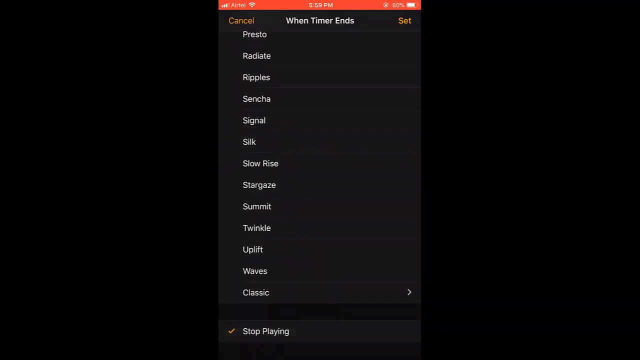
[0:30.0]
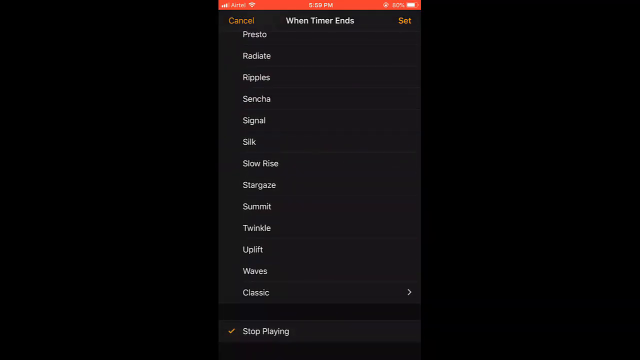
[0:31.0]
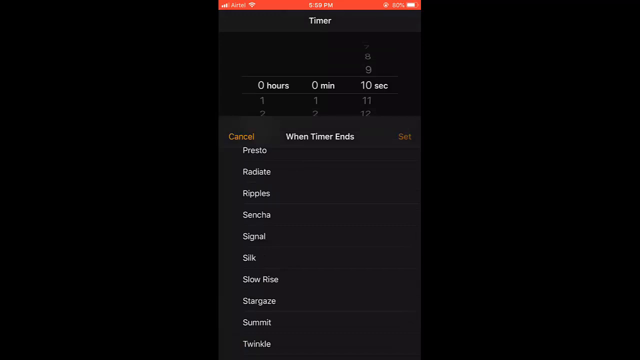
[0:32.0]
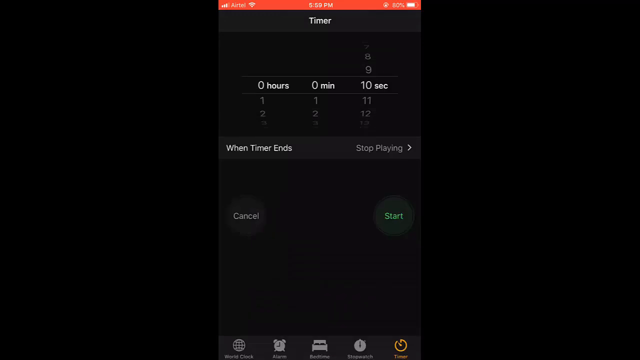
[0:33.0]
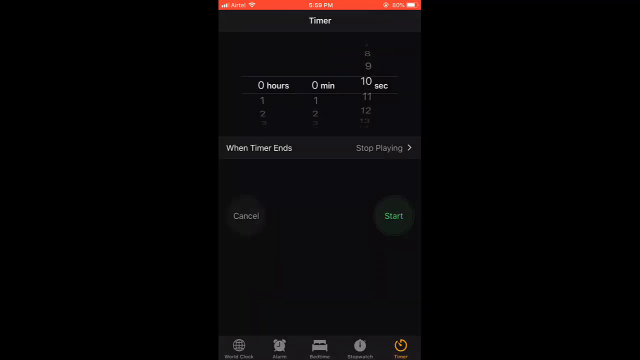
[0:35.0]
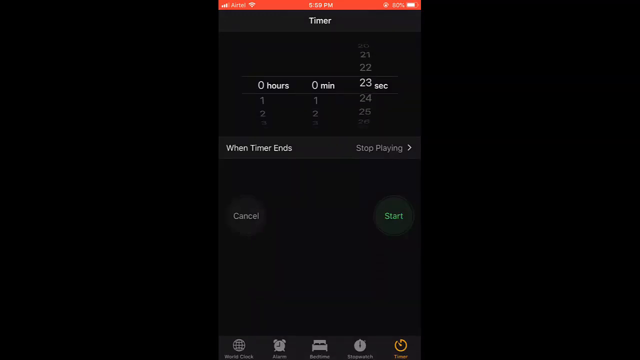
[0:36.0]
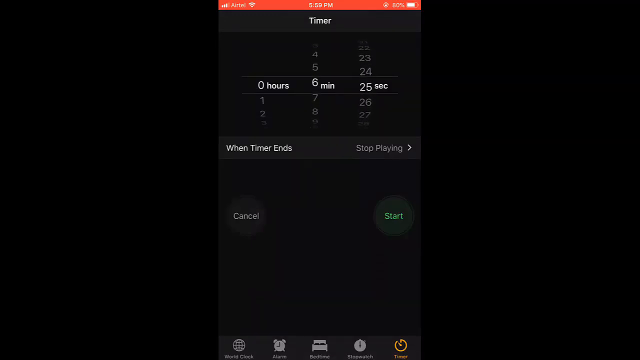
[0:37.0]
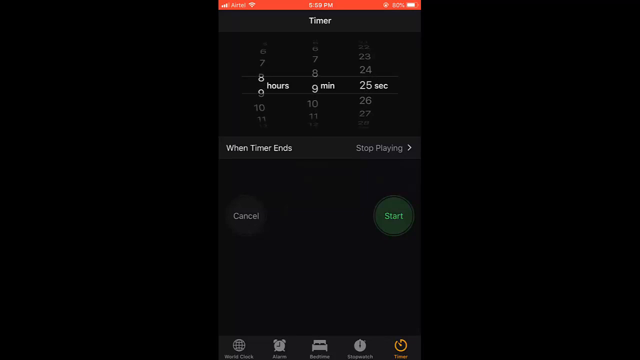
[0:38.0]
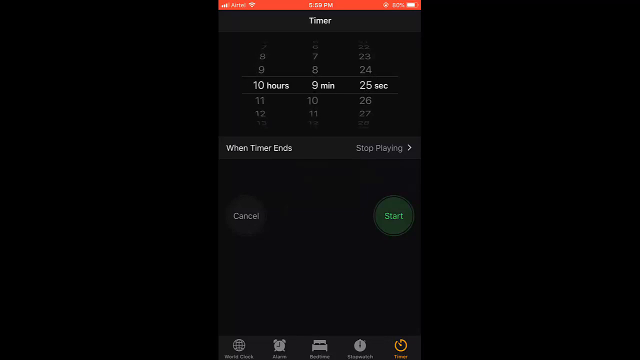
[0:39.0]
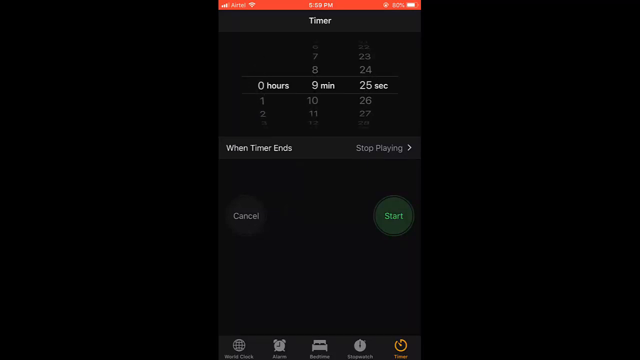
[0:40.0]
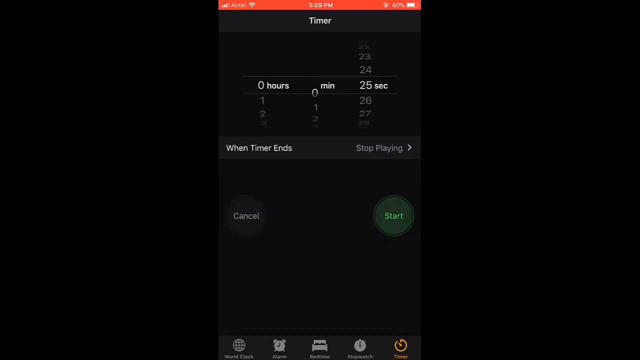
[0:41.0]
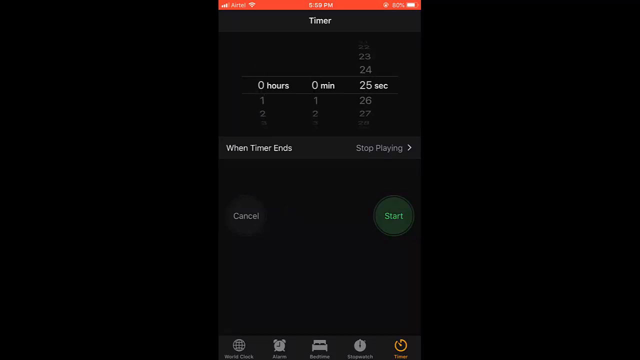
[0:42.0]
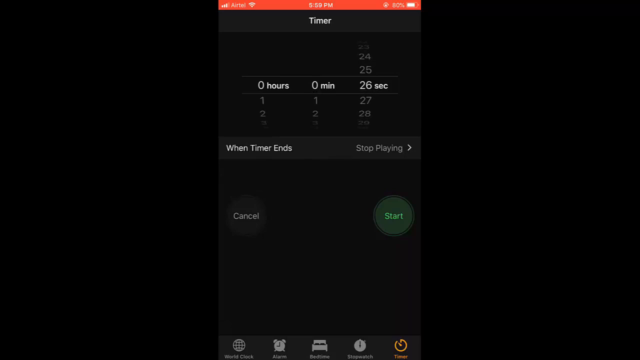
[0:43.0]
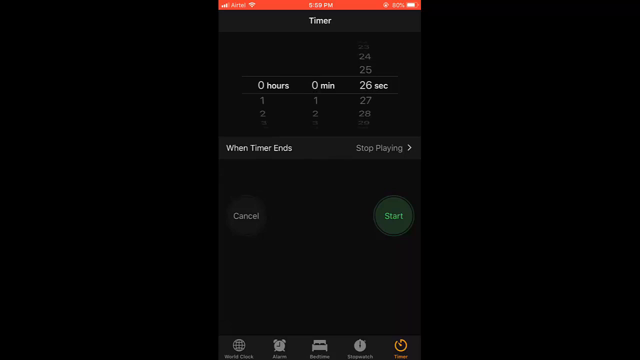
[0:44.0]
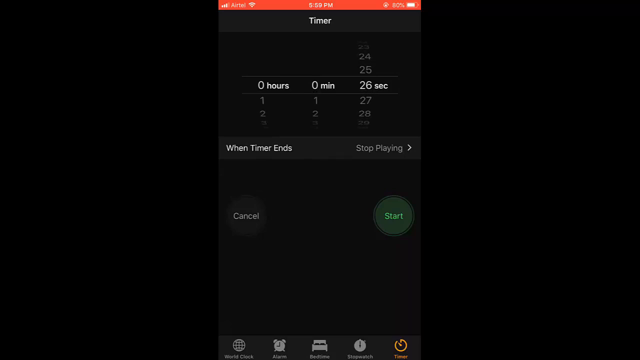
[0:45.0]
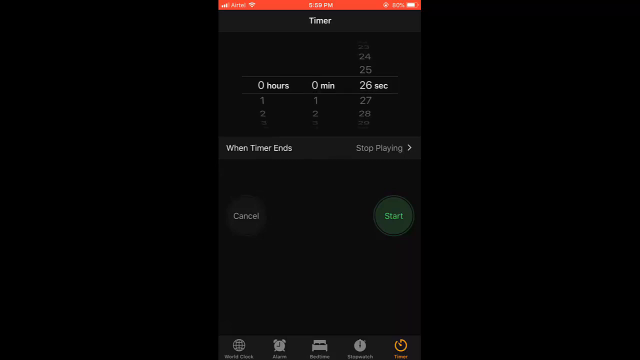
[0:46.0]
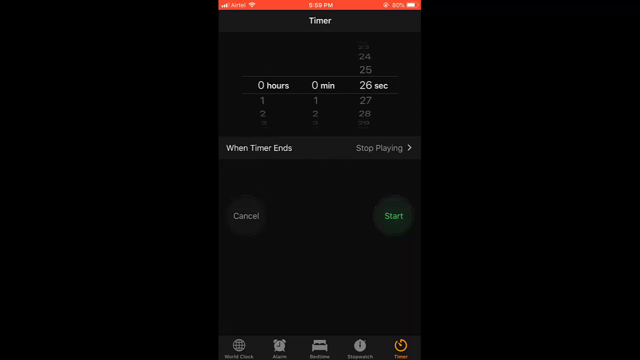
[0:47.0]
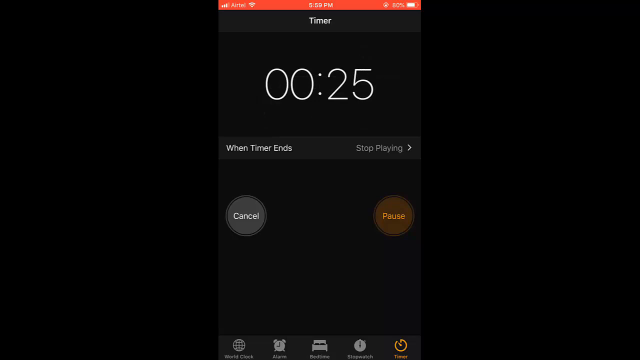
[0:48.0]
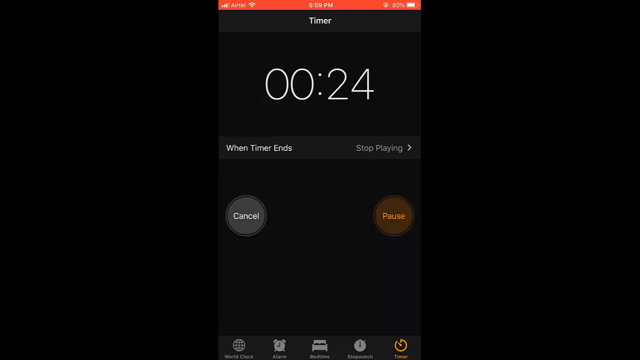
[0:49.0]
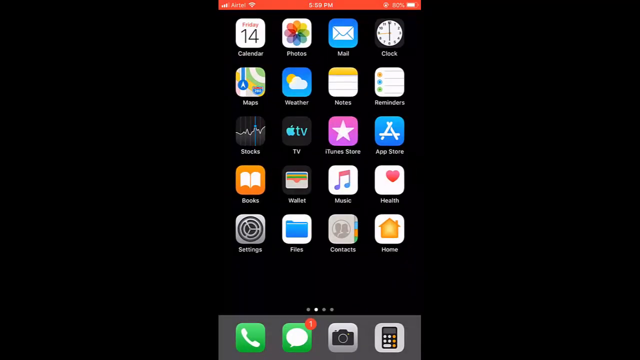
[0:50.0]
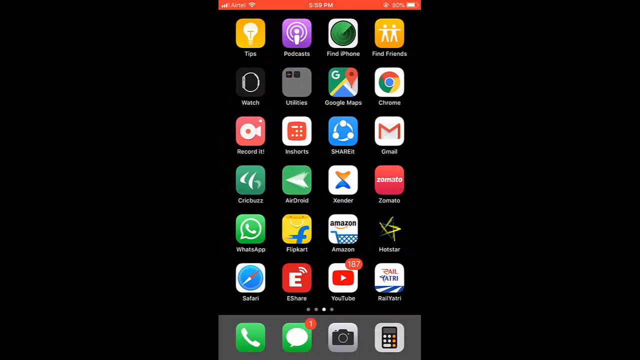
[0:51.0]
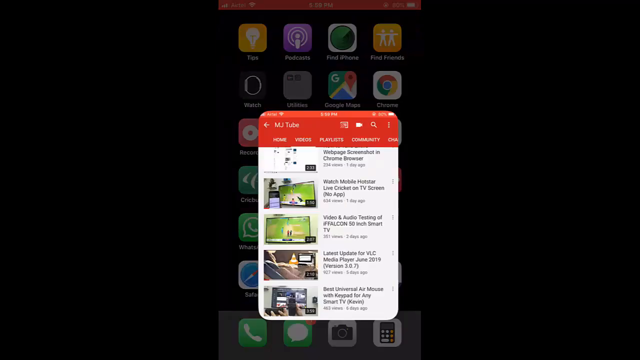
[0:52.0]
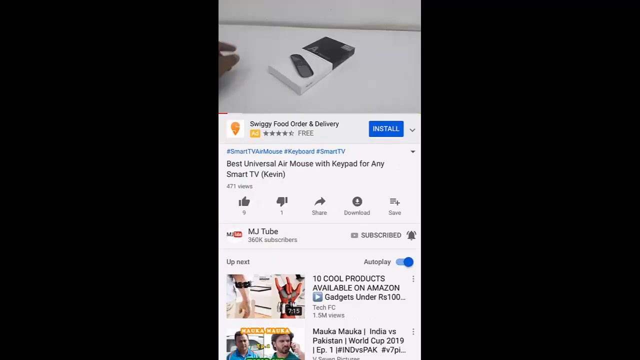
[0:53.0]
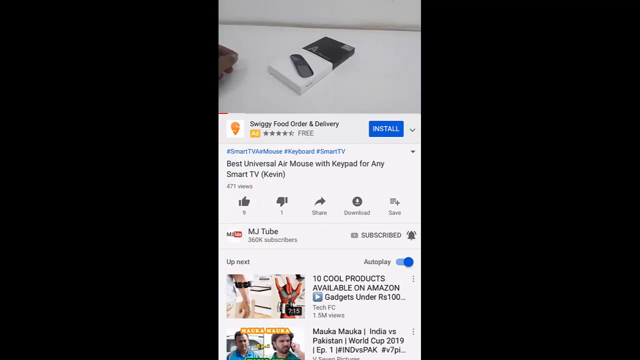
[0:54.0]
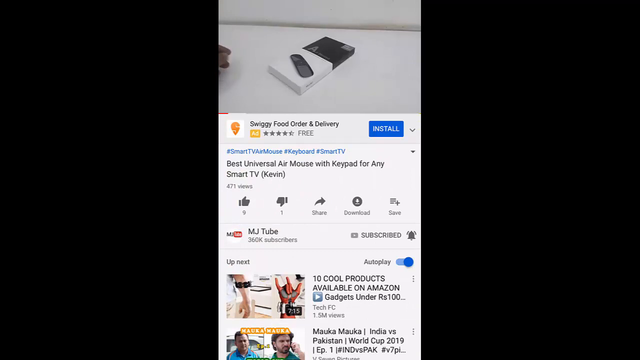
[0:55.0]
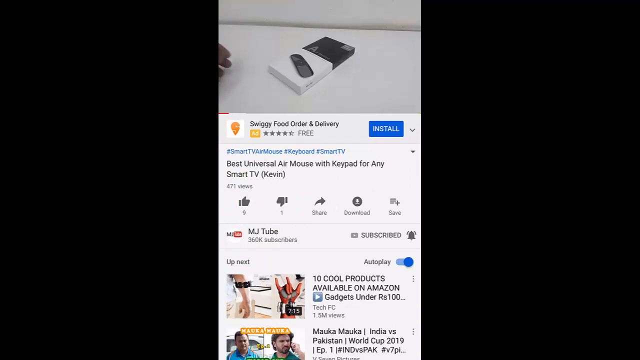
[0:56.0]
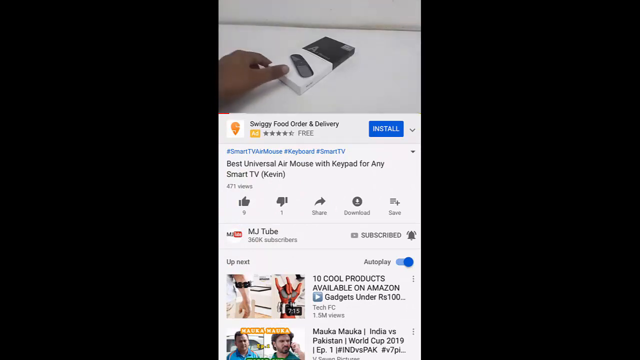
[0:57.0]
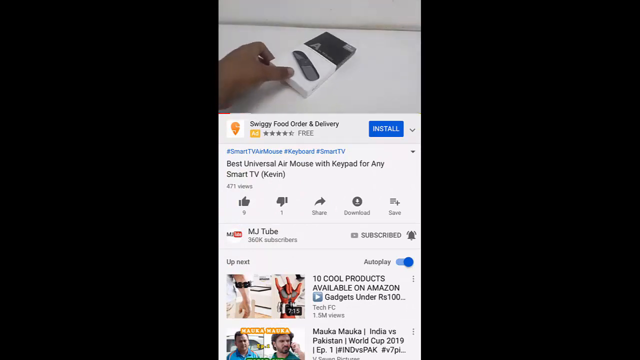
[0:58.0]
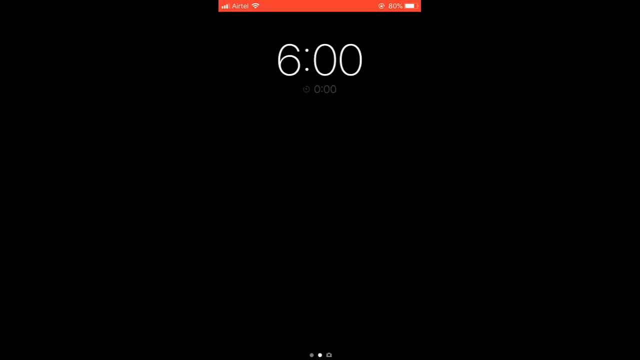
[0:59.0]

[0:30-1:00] The user exits the screen and goes back to the timer screen, setting a timer from right to left, selecting the seconds, minutes and hours. The seconds are set to 25, the minutes to nine and the hours to zero. The user then edits the selection to 26 seconds, zero minutes and zero hours before pressing the round green start button in the lower right-hand side of the screen. The timer begins to count down, and the round green start button is replaced by a round orange pause button. The user closes the clock app, scrolls through the other apps, and reopens the YouTube app to the MJ Tube page. The user selects the video "Best universal air mouse with keypad for any smart TV (Kevin)" and watches it.